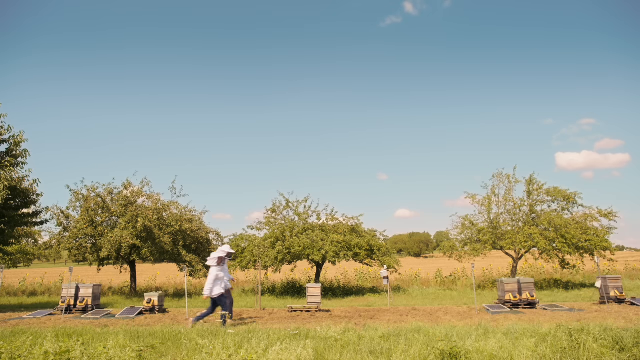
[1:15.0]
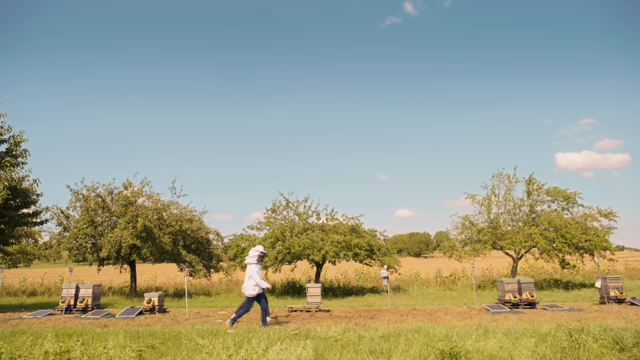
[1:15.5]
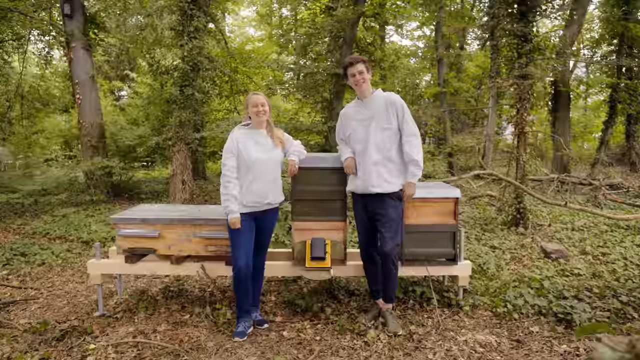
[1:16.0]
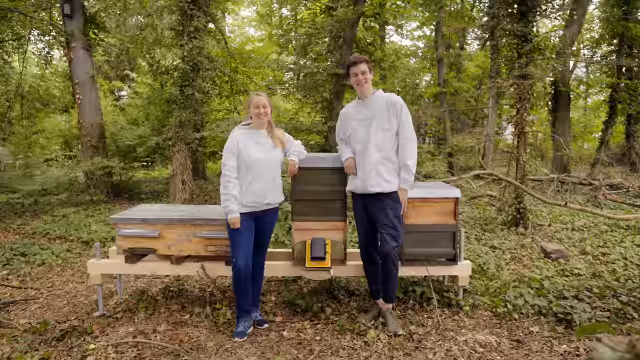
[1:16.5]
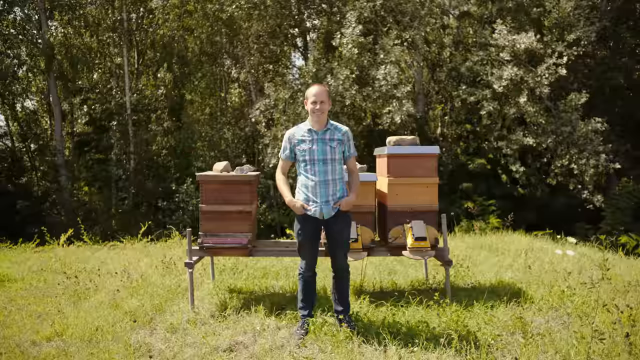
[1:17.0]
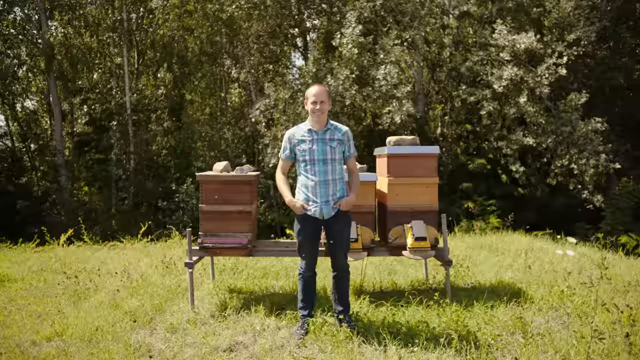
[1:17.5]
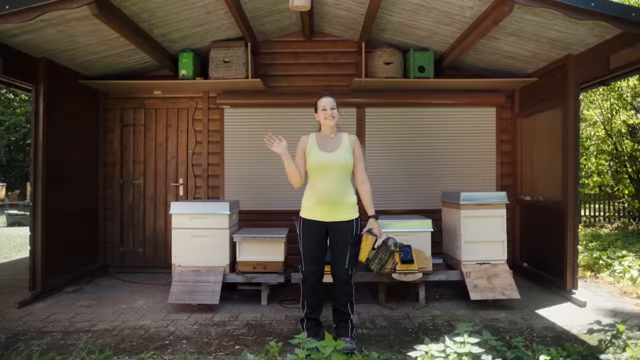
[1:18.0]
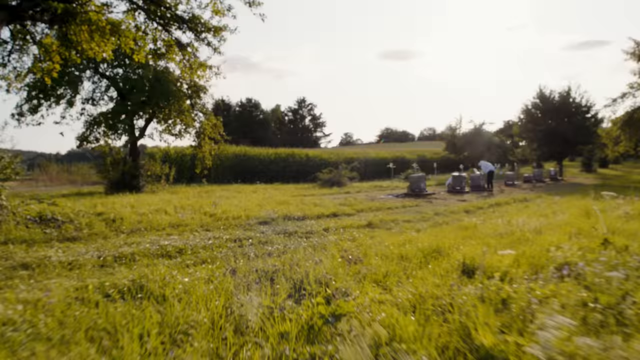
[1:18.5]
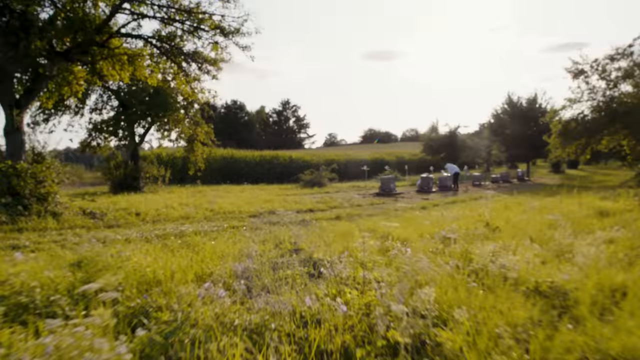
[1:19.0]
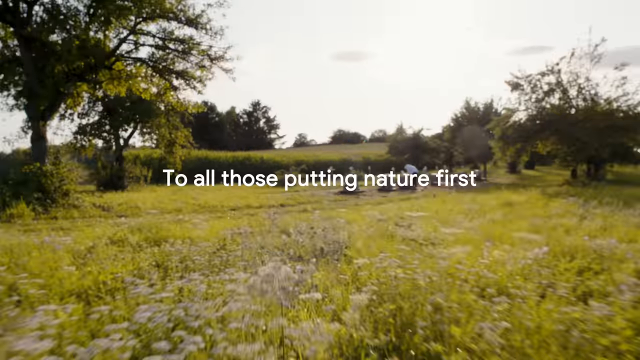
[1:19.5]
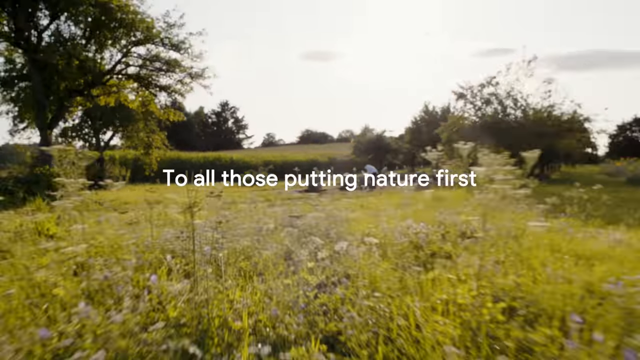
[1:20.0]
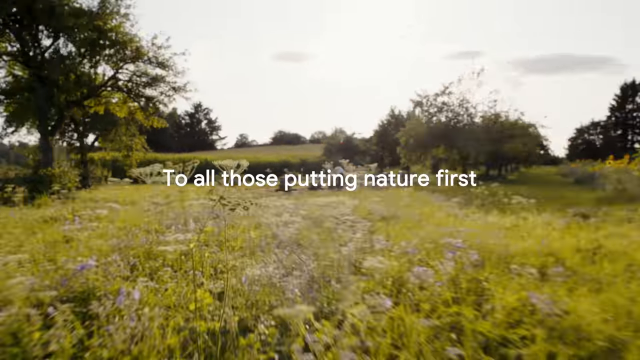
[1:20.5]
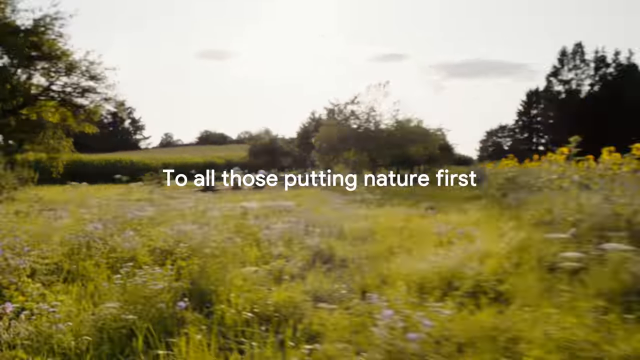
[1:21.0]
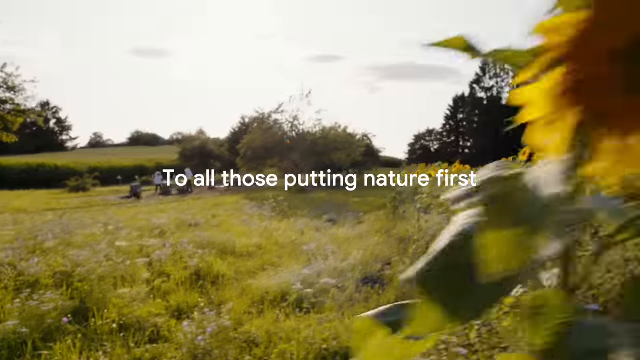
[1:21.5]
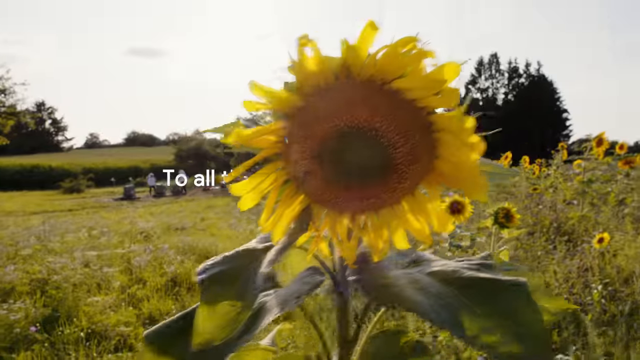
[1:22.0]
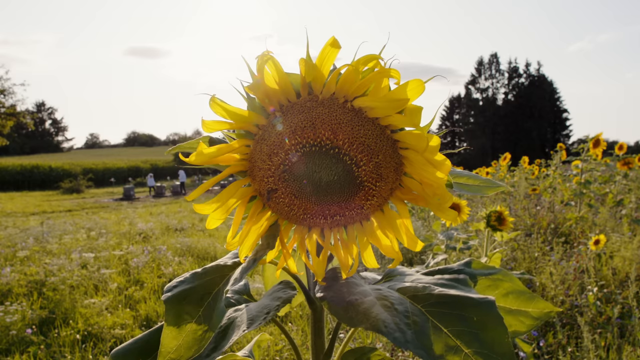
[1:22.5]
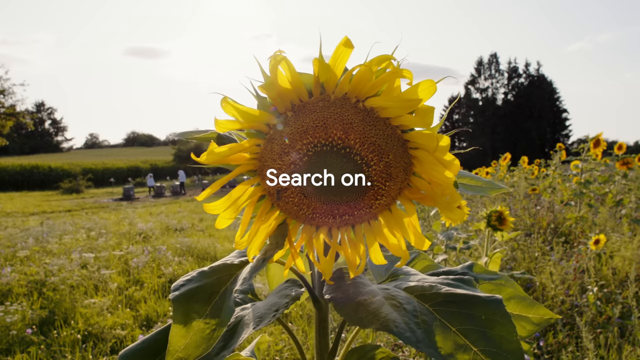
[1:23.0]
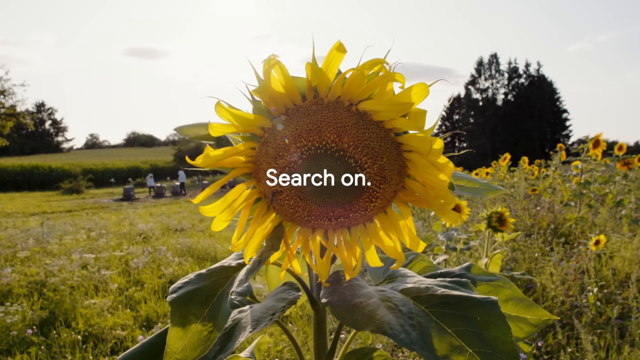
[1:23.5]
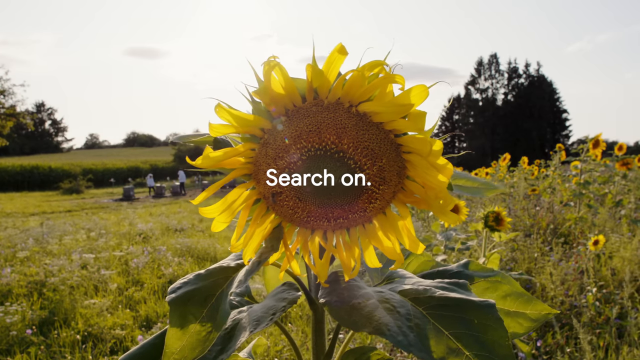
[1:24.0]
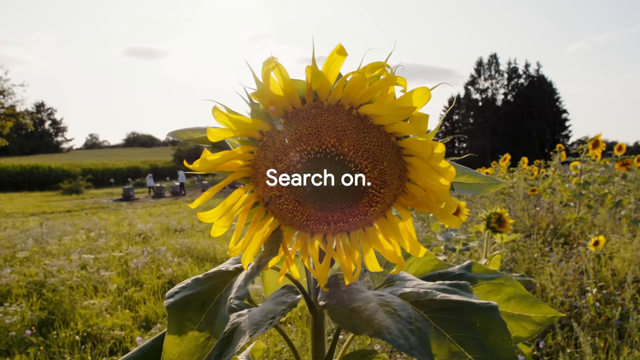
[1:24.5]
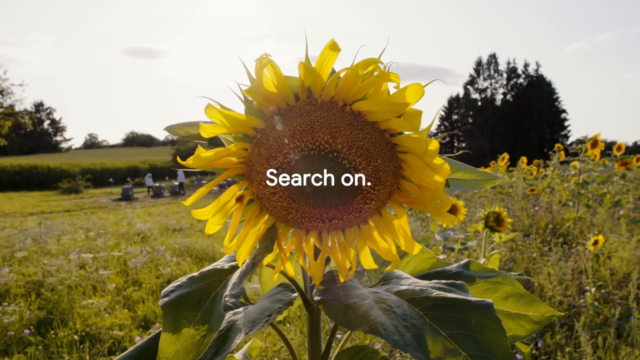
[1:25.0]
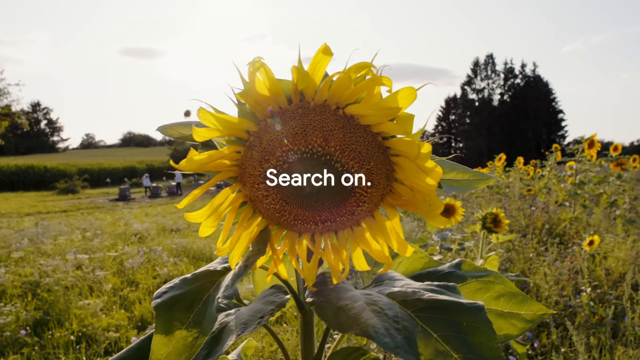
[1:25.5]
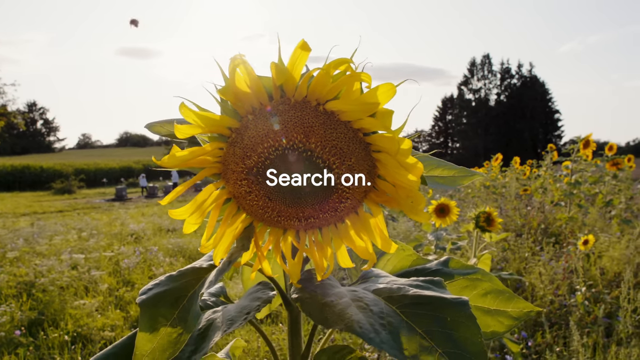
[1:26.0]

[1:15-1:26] Two people walk for about a second before the camera pans to the same two individuals looking at the camera. The scene changes to a slightly older, balding man in a short-sleeve button-up shirt, looking at the camera and standing in front of the hives, the boxes of honeybees; two of the boxes have yellow counters that count how many honeybees go in and out. A woman wearing yellow waves at the camera for about a second before the camera pans to a large open field of grass with some trees in the background and a row of the bee boxes. Text appears on the screen reading "to all those putting nature first", and the camera pans over to a sunflower with the closing text "search on".